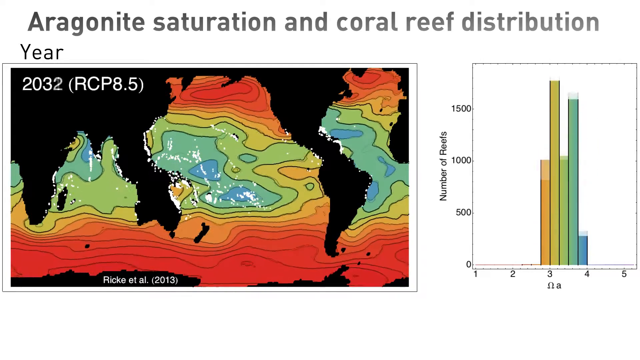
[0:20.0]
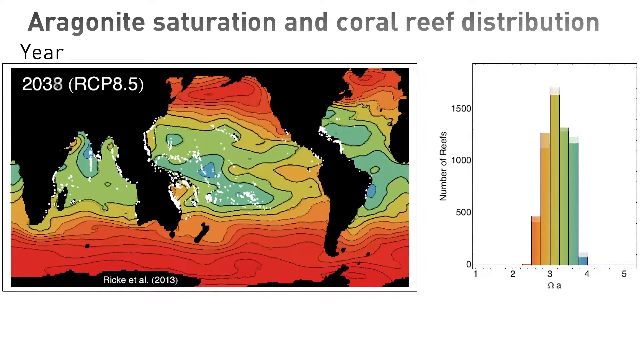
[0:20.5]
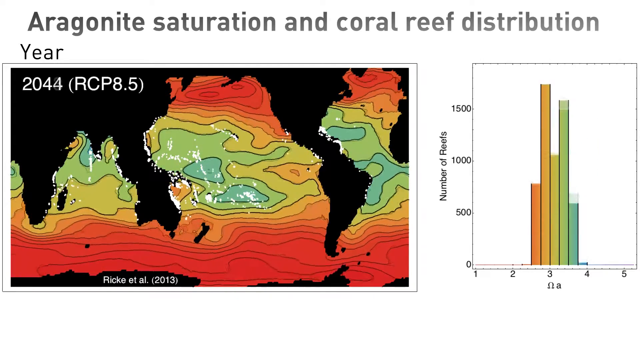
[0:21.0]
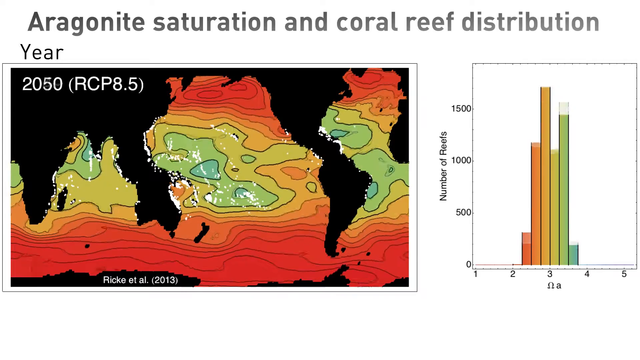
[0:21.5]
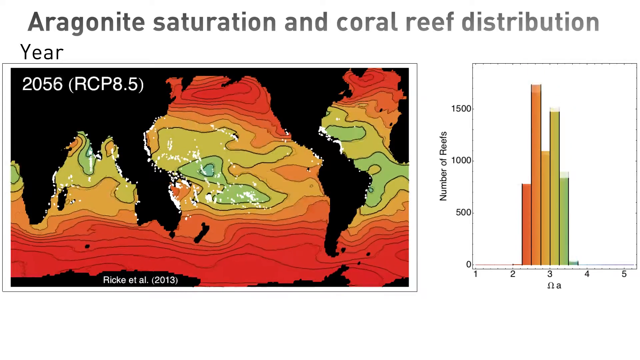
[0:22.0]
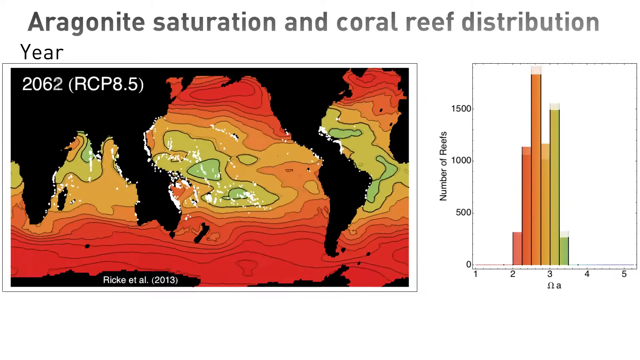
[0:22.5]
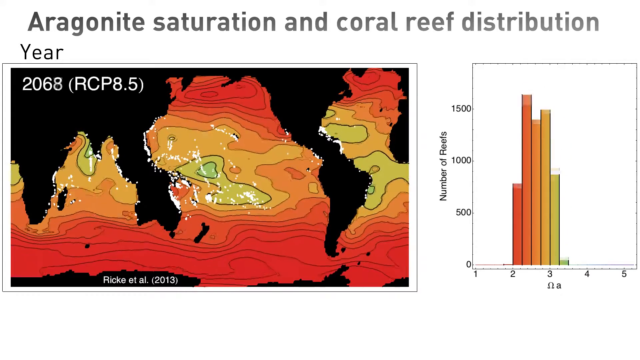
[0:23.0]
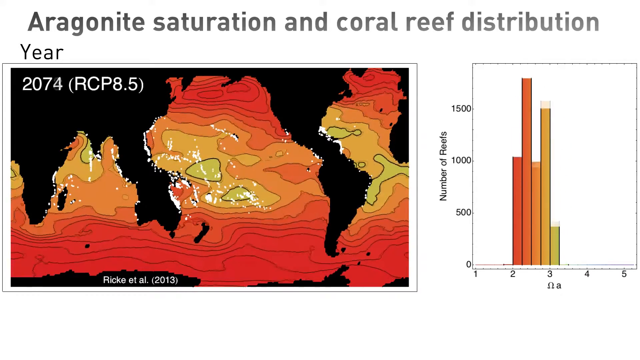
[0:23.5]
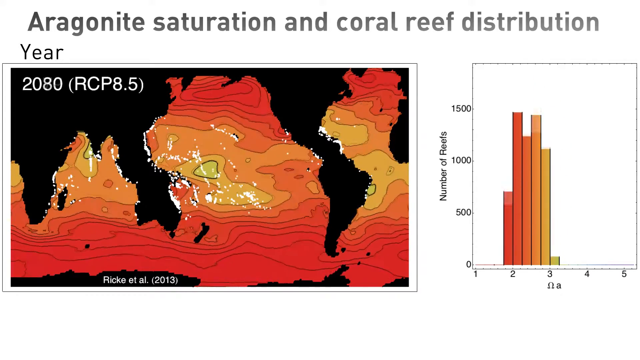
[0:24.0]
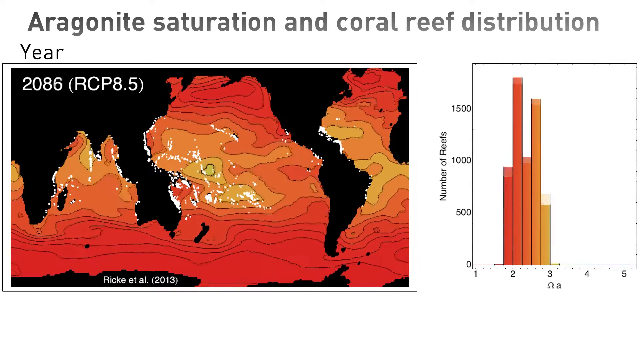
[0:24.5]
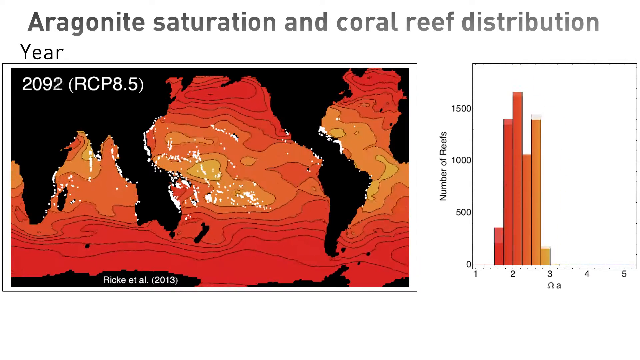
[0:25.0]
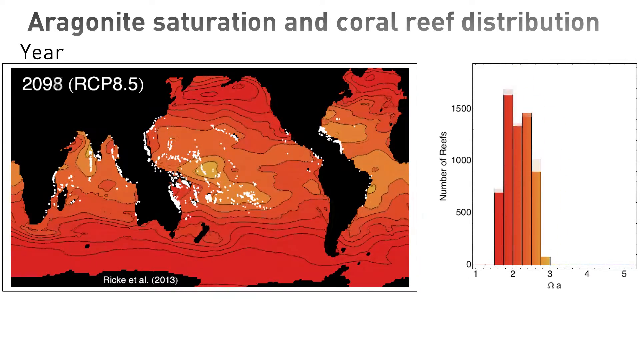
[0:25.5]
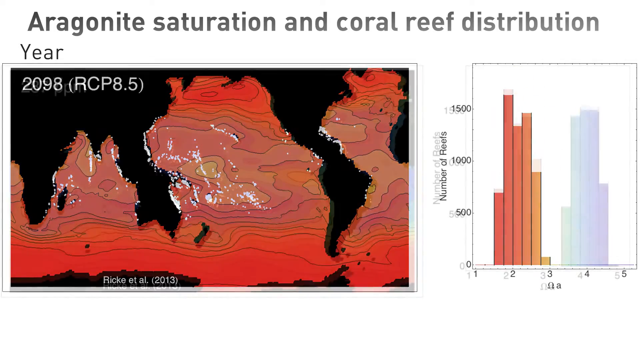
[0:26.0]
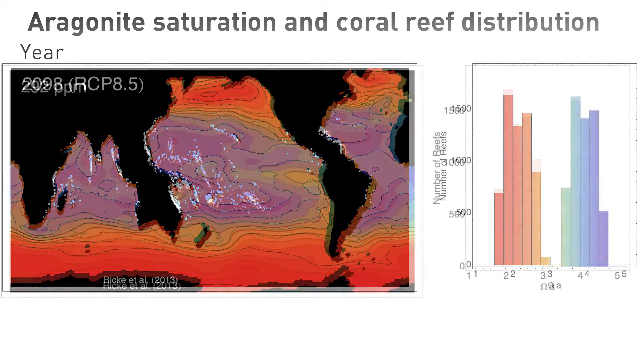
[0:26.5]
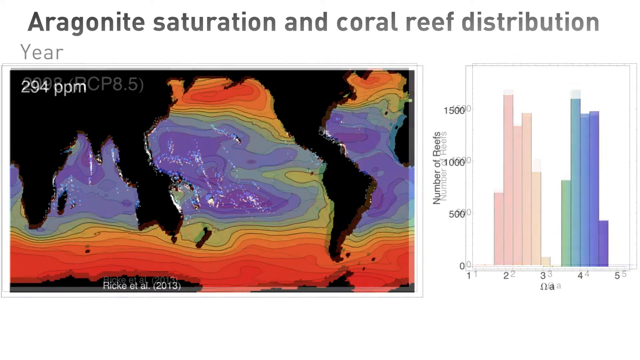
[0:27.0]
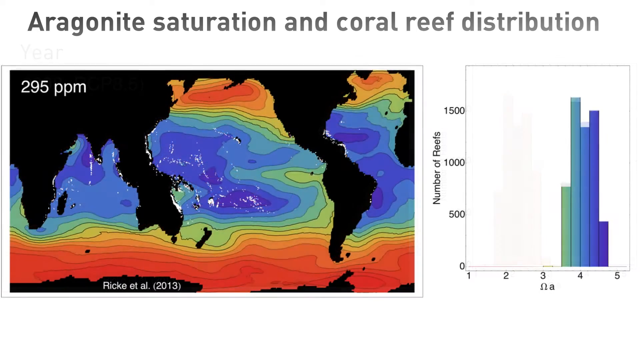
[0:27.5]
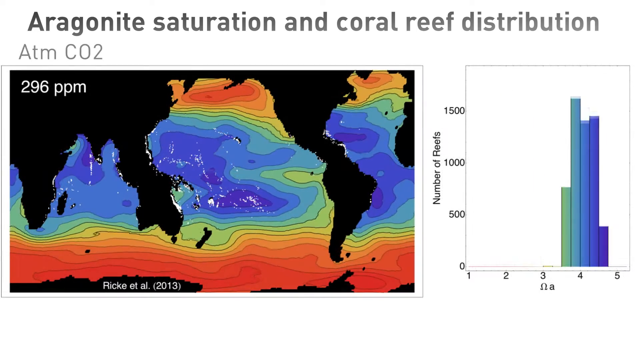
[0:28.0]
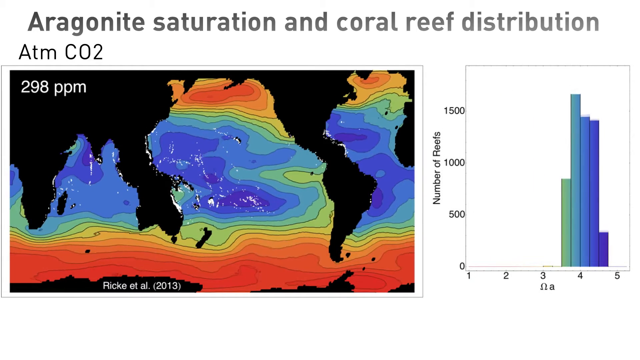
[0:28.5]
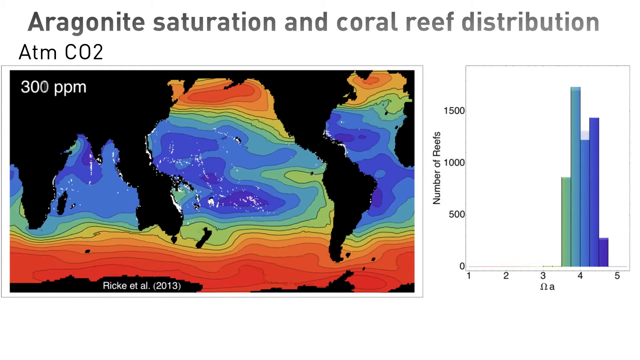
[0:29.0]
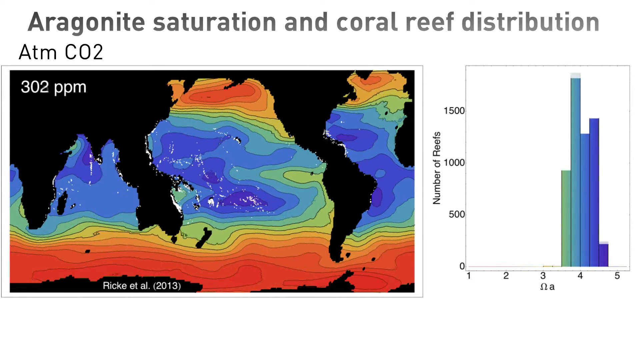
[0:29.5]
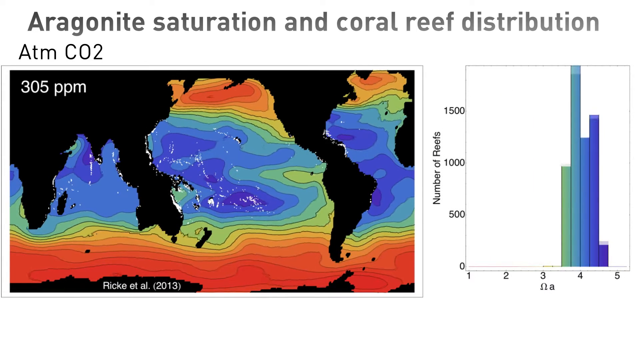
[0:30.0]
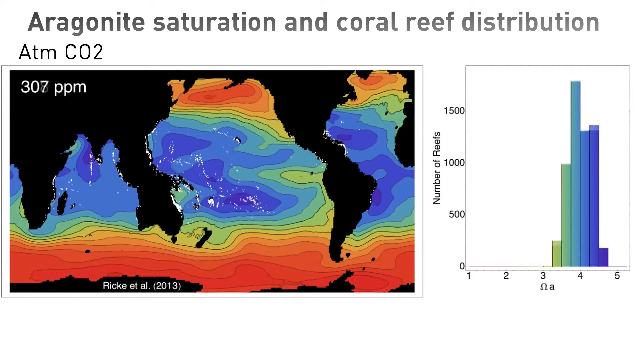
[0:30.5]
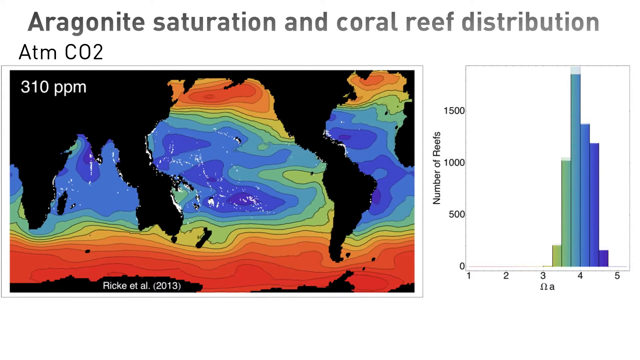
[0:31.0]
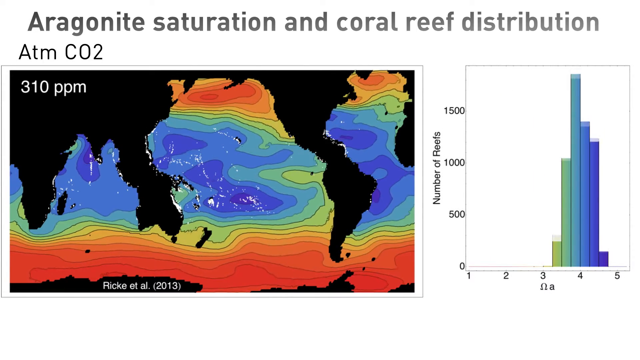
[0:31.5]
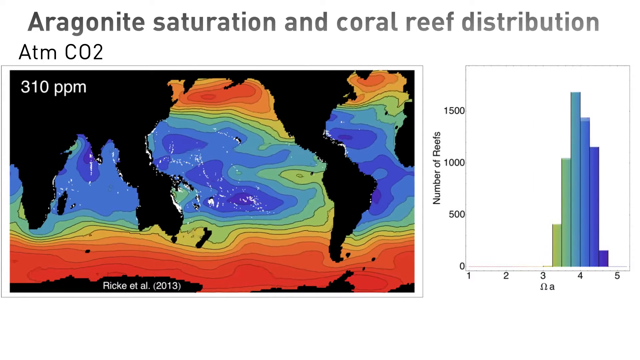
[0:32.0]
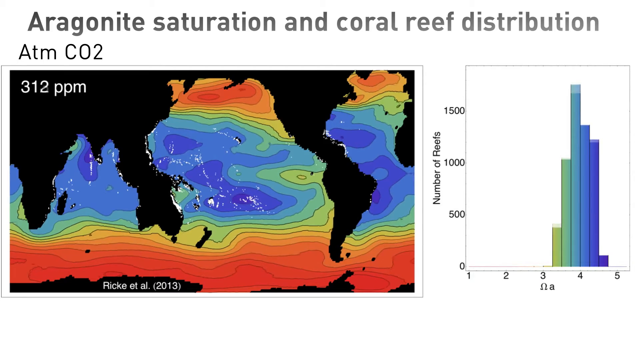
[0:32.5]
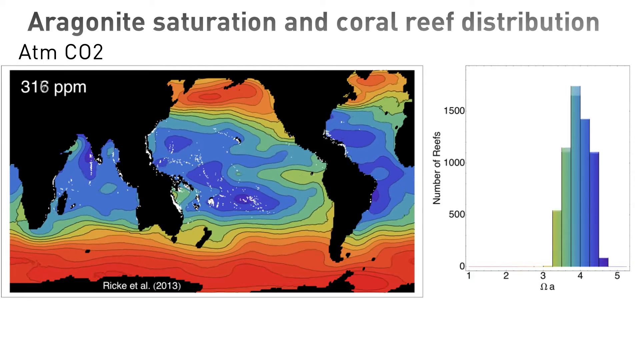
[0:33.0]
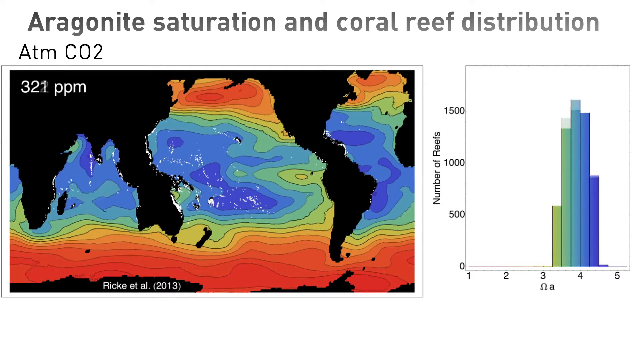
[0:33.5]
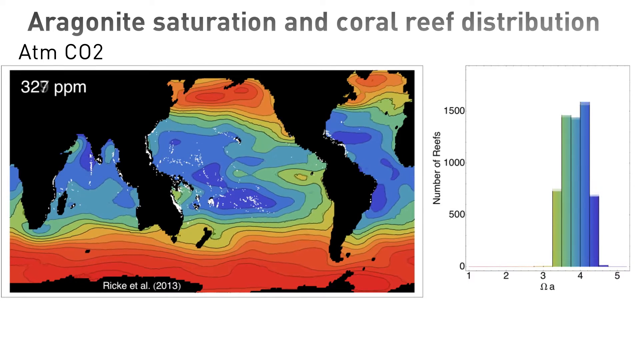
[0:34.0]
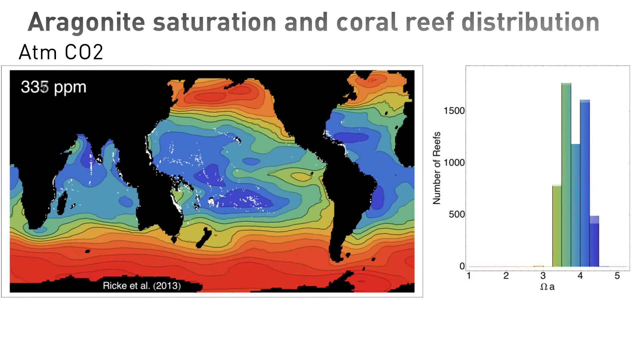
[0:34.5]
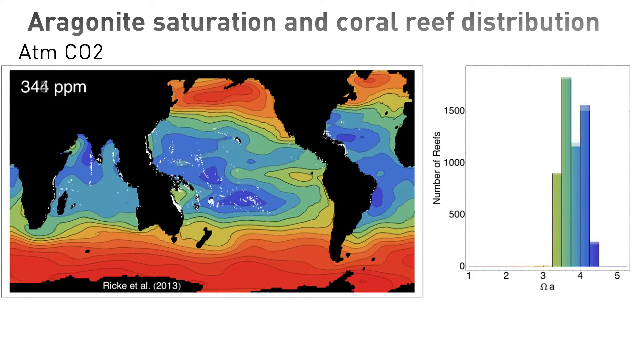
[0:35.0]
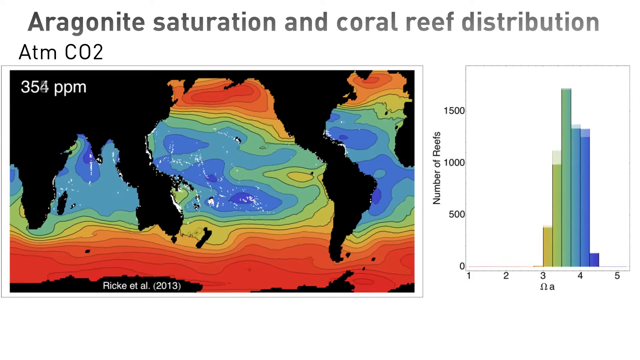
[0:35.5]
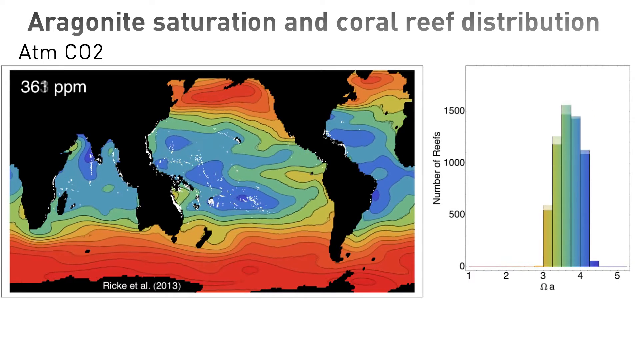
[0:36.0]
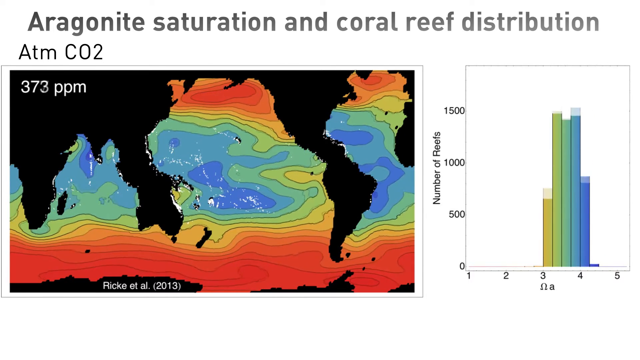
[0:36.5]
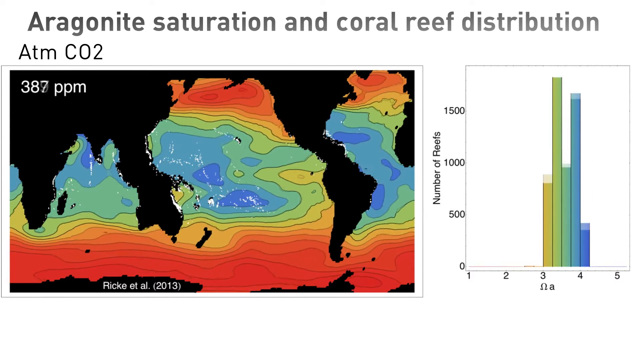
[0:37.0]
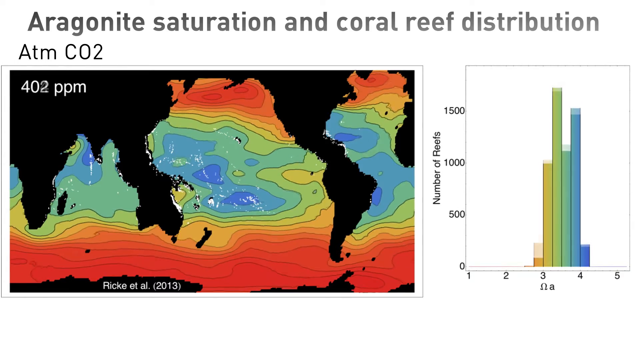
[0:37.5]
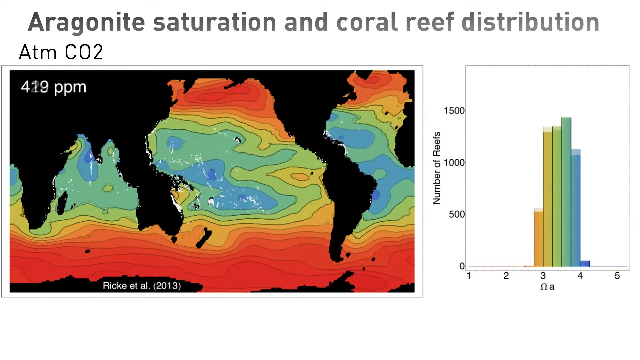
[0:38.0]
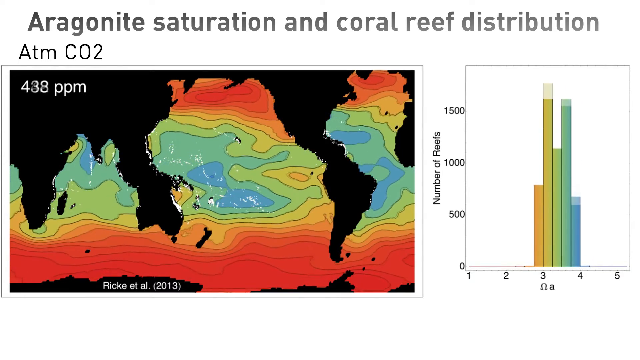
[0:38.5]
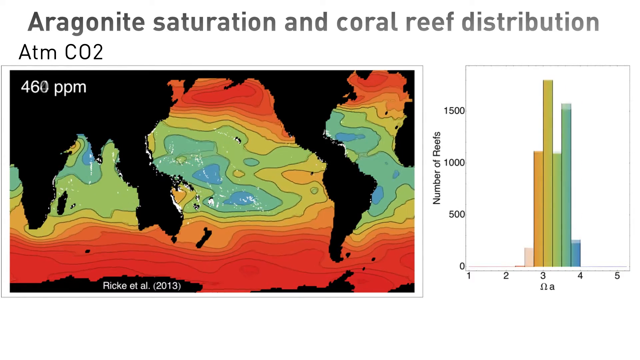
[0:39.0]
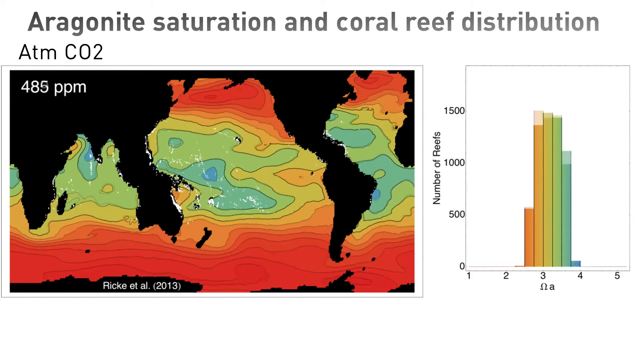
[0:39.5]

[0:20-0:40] There are two rectangles on the right side, including a smaller rectangle with a bar graph in the middle. Its bottom axis runs from one to five and its left axis from zero up to 1500, with bars in the middle; at first the tallest bar starts at the number three. On the left side of the screen, a big rectangle holds a computer-generated depiction of the topography of the Earth and the oceans and how the coral is in the oceans. Land is all black, and the water starts out blue in the middle sections, then goes to green, yellow and orange. In the upper left corner is the year, starting at 2032, with the word "Year" above it. As the year goes up, the bars in the graph move toward the left, and the reef depiction on the left changes: the blue goes away and it gets more red. By 2069 the bars have moved all the way left to between two and three, and no blue is left in the ocean. At about 2083 the ocean looks mostly red, with a couple of green spots and orange, while the graph shows mostly red and yellow bars slowly moving closer to the left side. By 2093 the reef colors in the ocean are just red and a little yellow, and the graph's values have moved far to the left, mostly above the number two. The animation stops at the year 2098, with the graph almost completely toward the left and some faded-out bars visible on the right side. It then changes so the graph shows blue and green bars, the year on the left is replaced by "295 ppm," and the ocean has blue in it again. As the ppm numbers slowly increase, the bars adjust mostly up and down rather than side to side, and the blue in the ocean disappears, enveloped by orange and yellow.